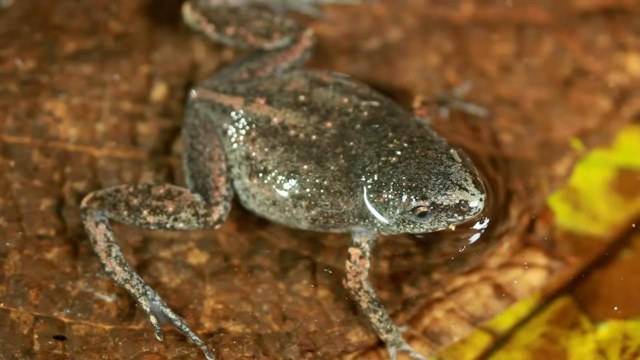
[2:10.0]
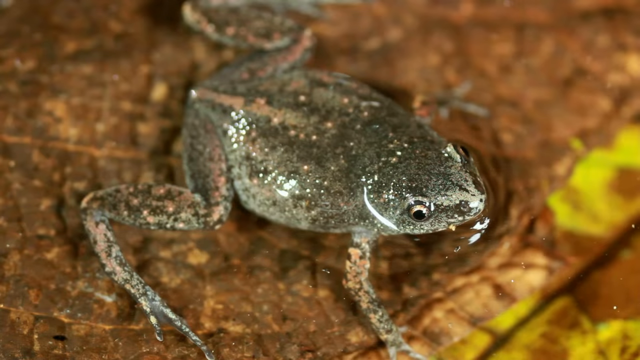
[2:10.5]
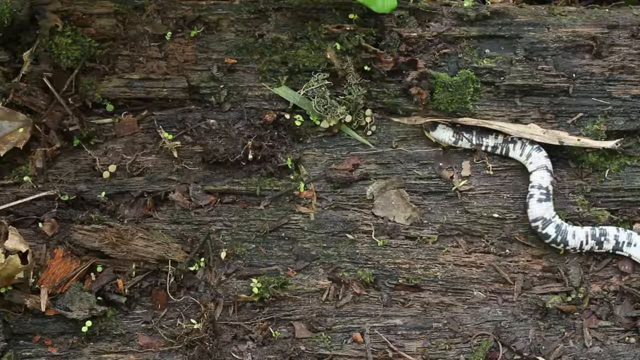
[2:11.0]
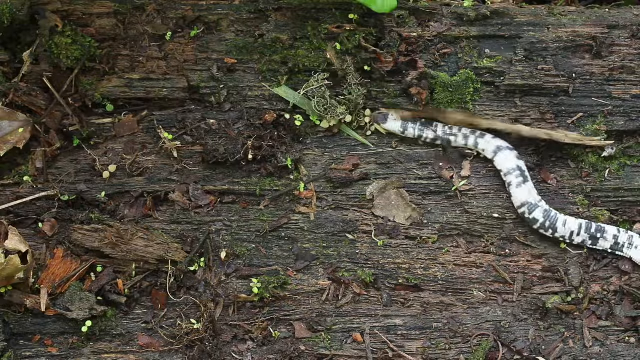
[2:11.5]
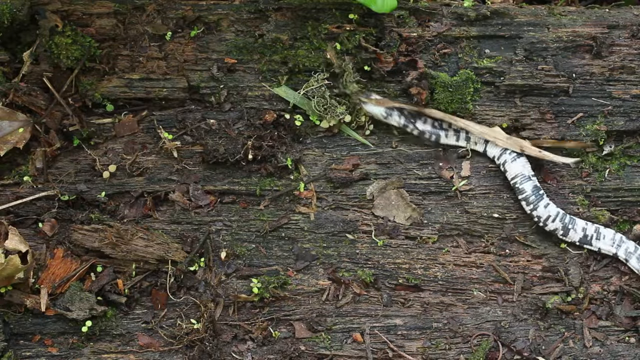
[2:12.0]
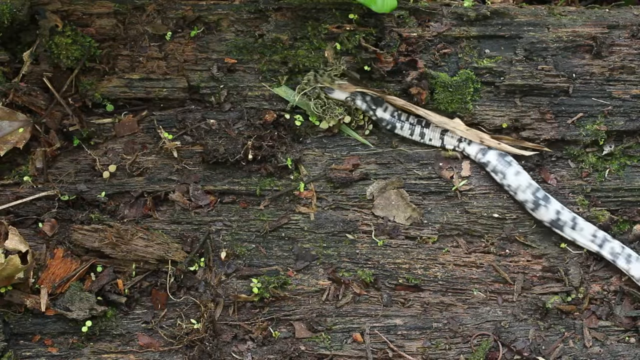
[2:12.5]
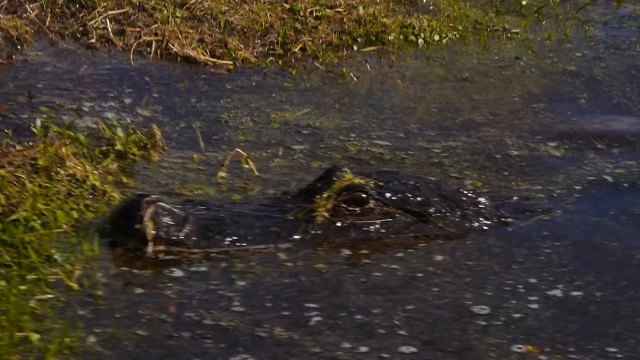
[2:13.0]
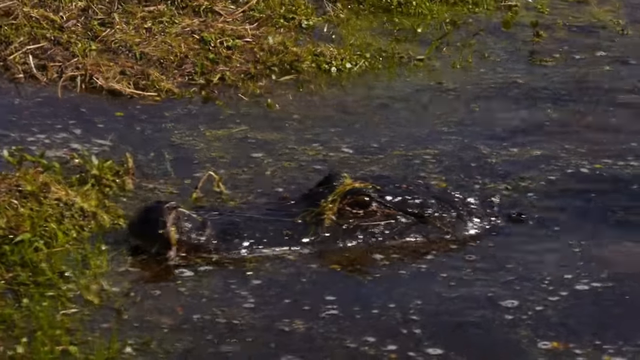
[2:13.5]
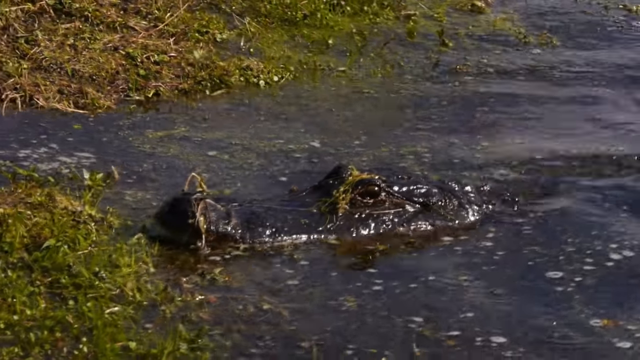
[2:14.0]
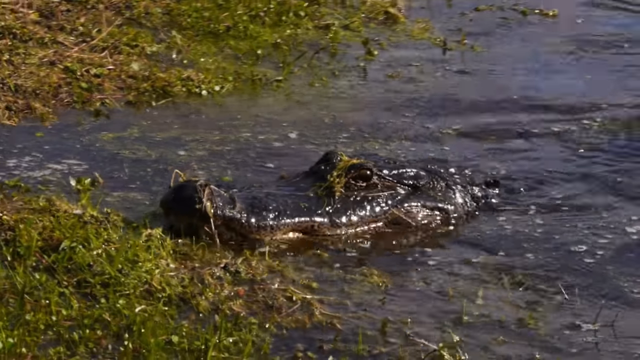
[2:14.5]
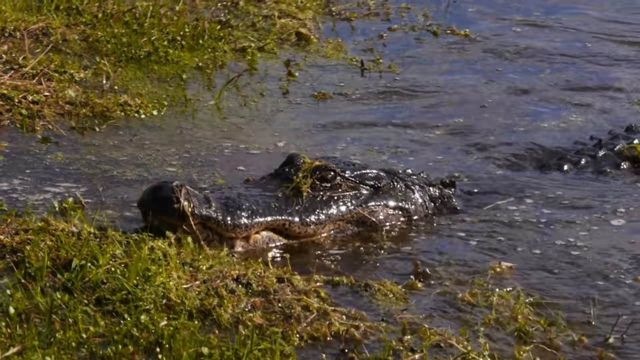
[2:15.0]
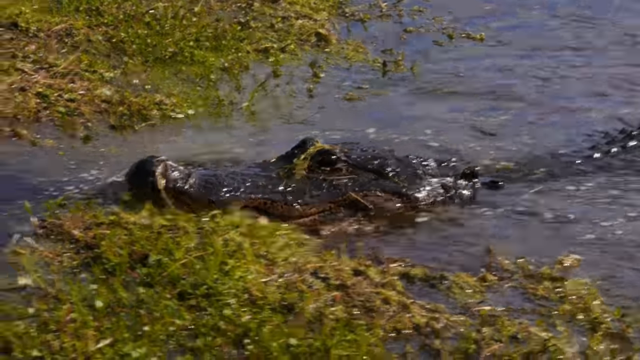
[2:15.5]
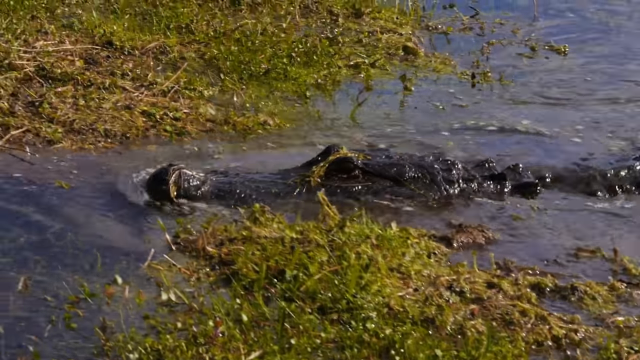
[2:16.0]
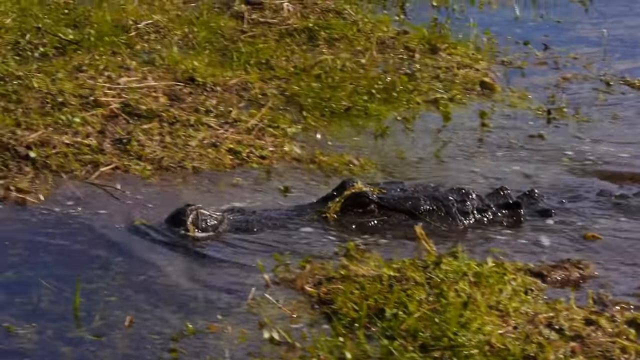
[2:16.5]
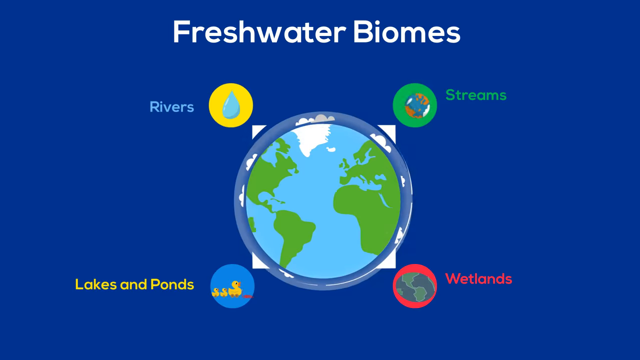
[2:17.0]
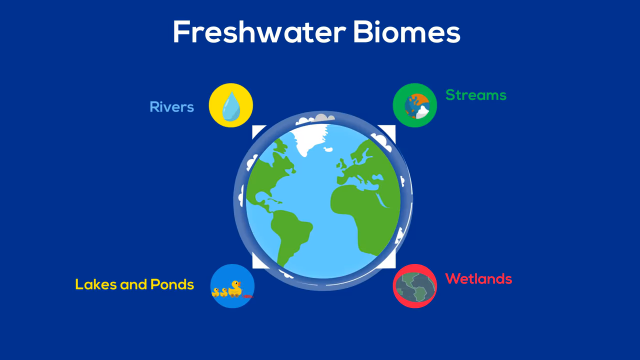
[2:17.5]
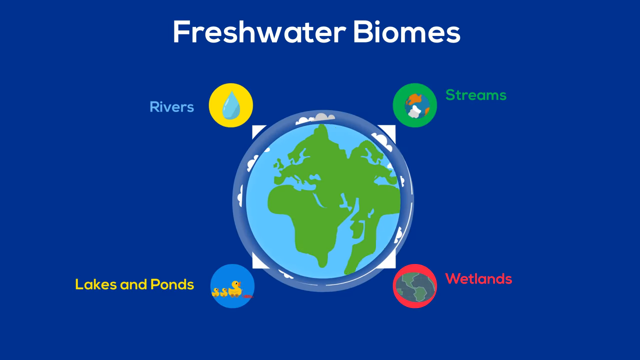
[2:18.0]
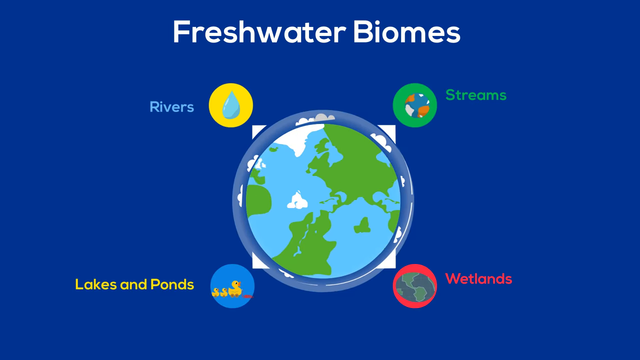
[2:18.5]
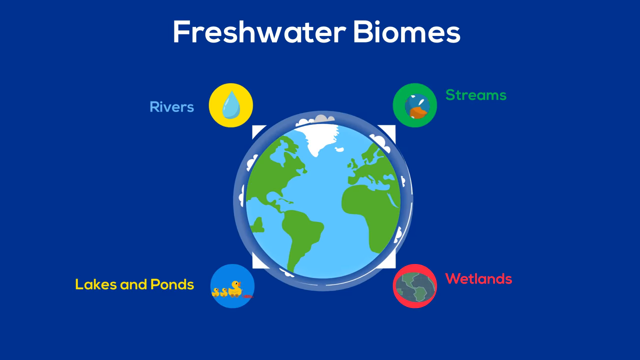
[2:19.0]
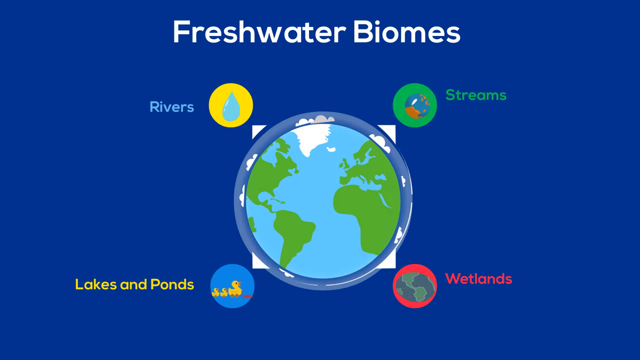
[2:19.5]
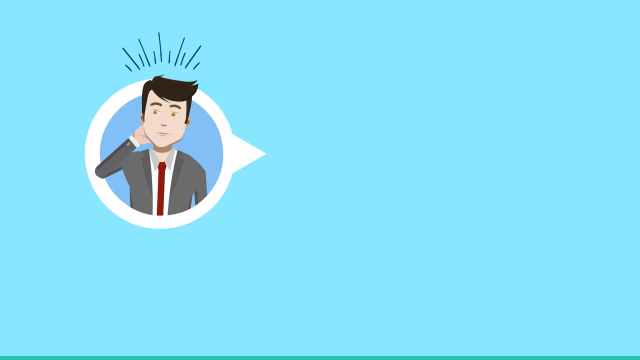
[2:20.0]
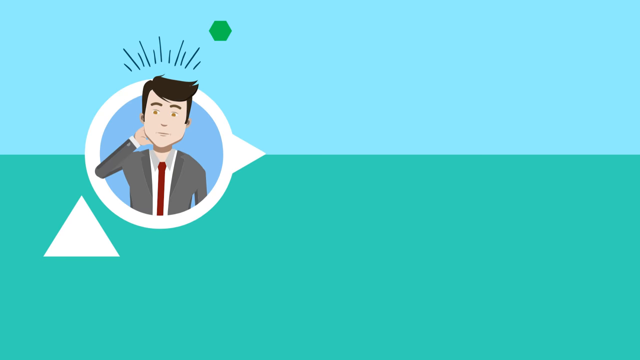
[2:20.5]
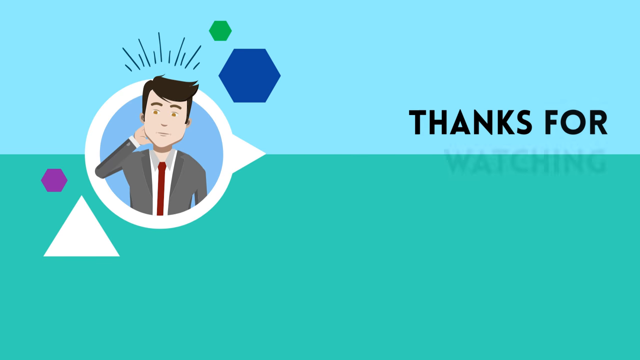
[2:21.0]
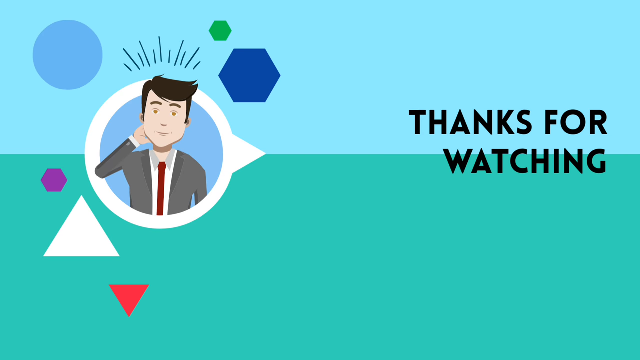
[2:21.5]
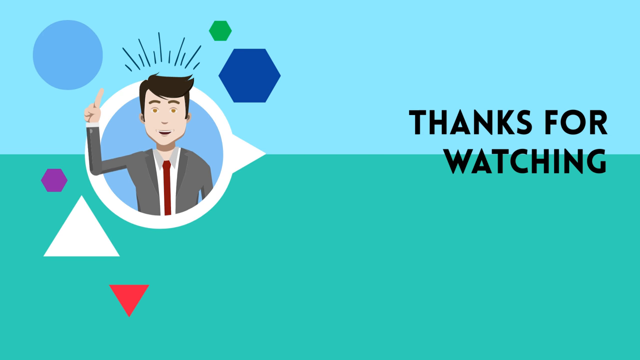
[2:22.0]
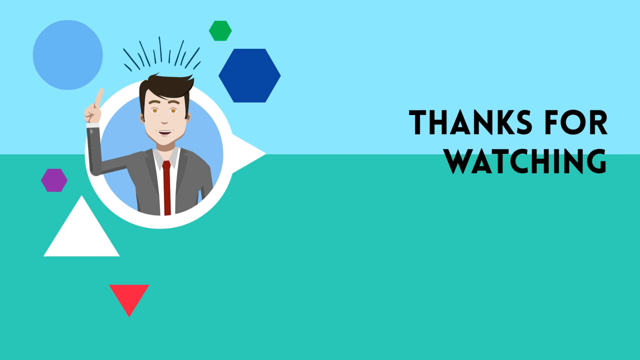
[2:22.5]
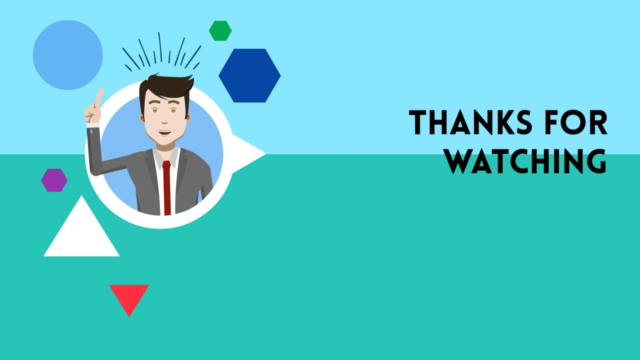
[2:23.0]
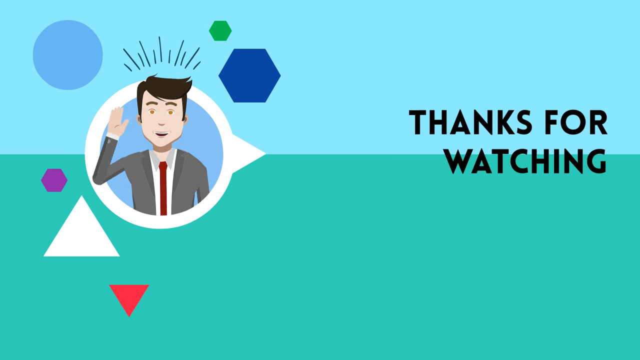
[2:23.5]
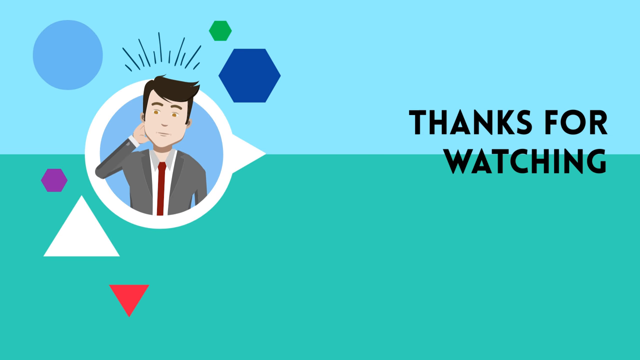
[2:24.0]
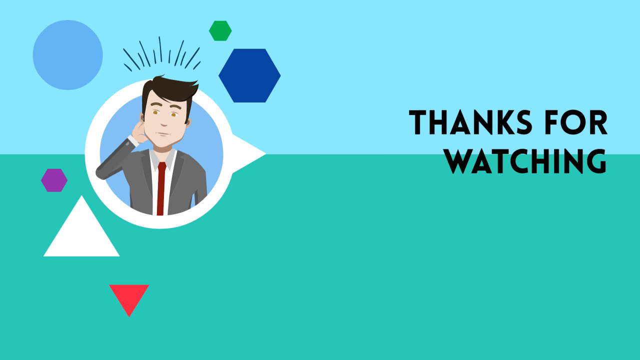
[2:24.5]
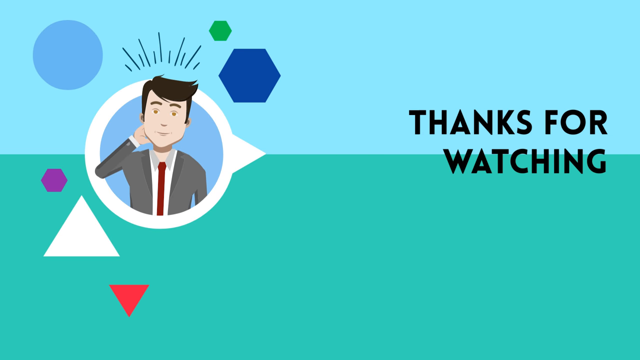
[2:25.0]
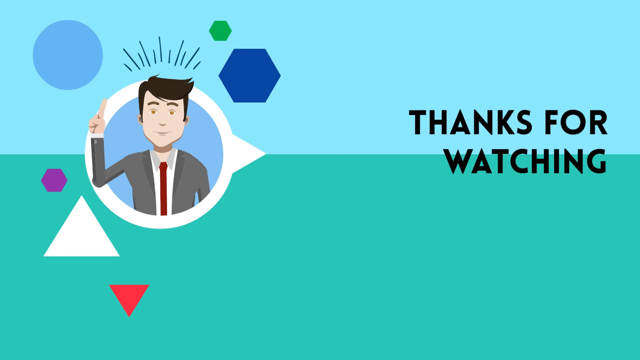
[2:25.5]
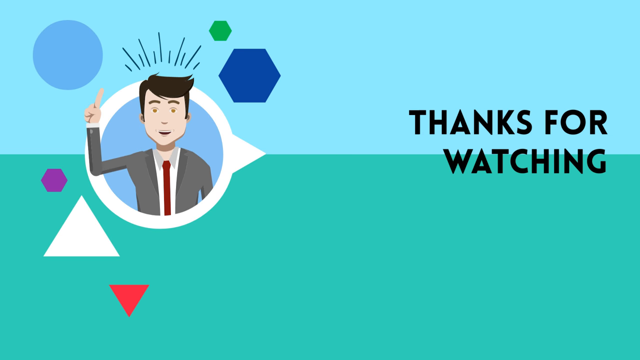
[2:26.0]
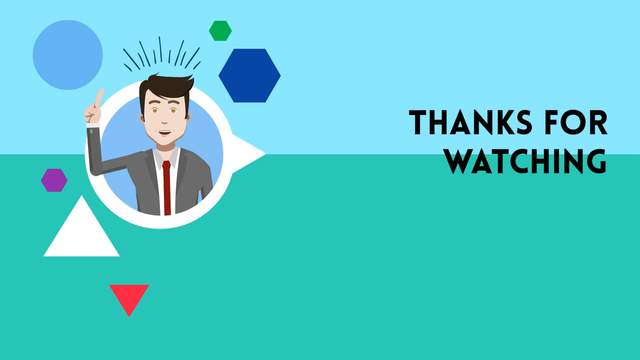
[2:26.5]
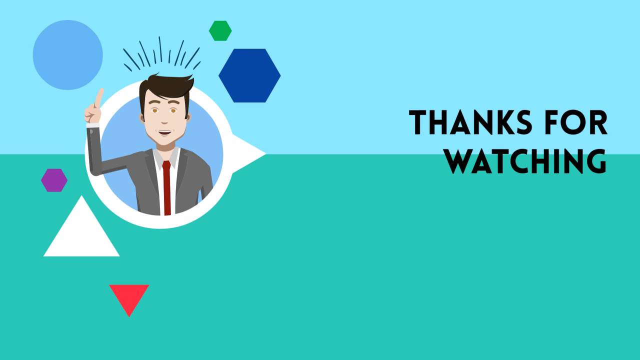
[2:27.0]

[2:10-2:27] A white creature with black circles around it, either a snake or a caterpillar, appears on second look to be a caterpillar. It crawls through a forest area that looks kind of dark and wet. An alligator floats in a vegetation-covered waterway, only its long nose and eyes showing. Marsh grasses appear, and a diagram shows how the earth is made up of water and which waterways there are: rivers, lakes, ponds and streams. Advertisements for additional videos on biomes follow.